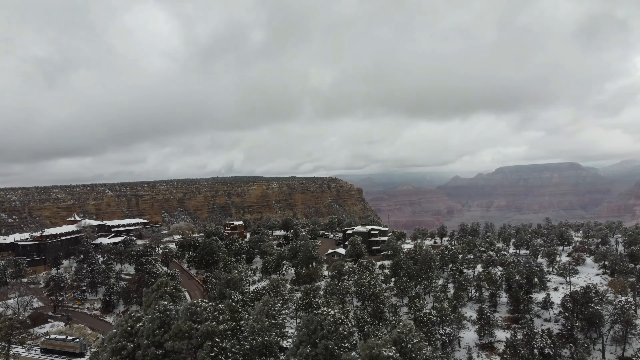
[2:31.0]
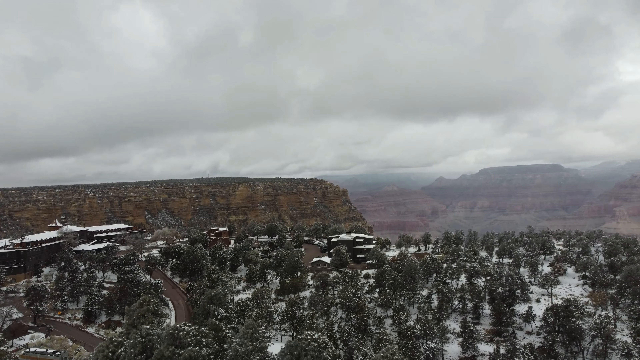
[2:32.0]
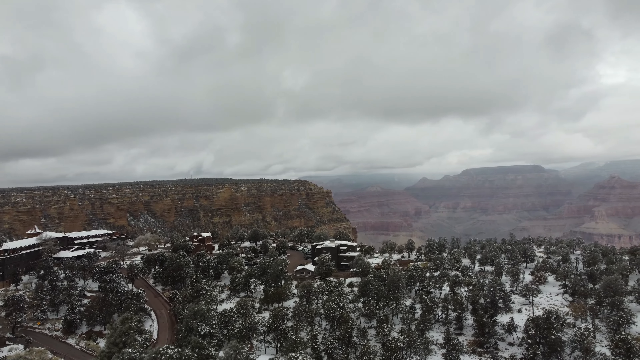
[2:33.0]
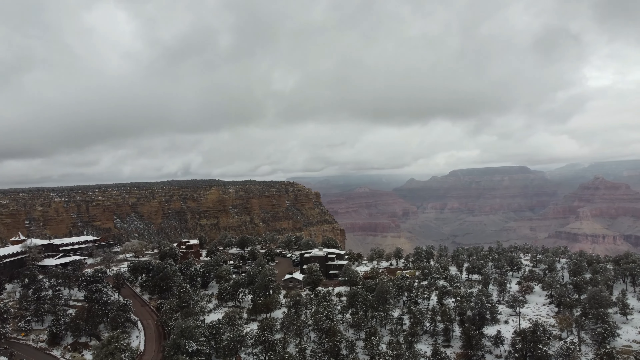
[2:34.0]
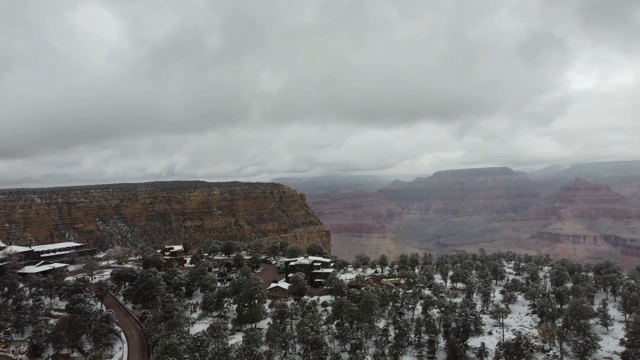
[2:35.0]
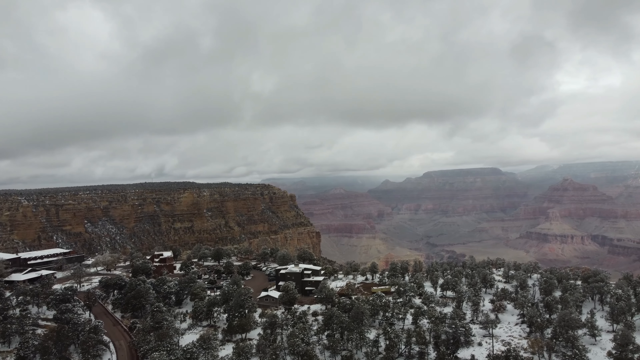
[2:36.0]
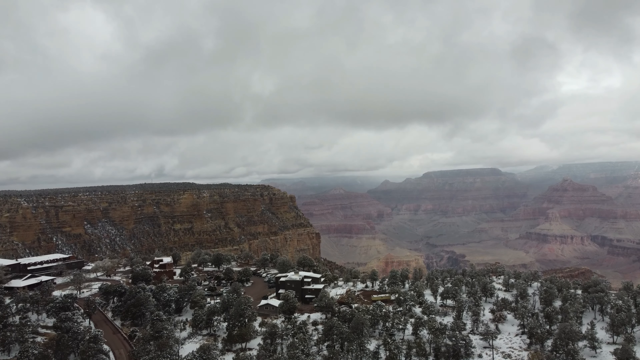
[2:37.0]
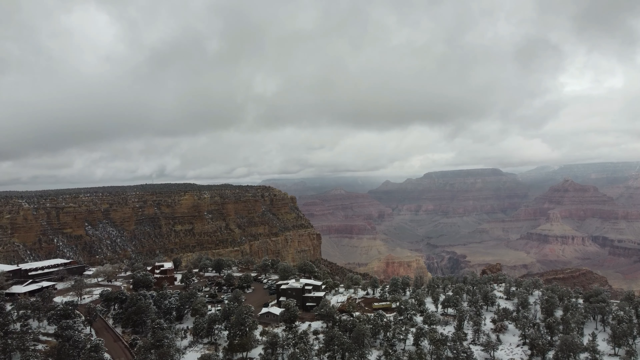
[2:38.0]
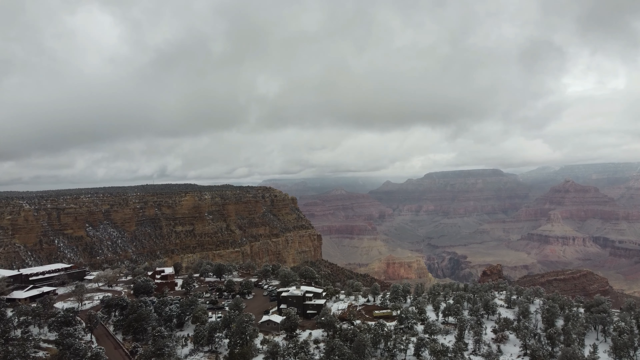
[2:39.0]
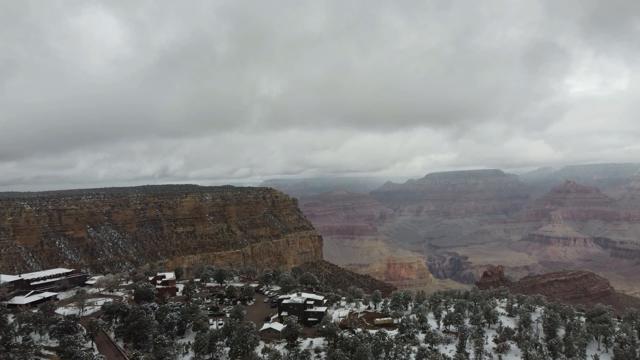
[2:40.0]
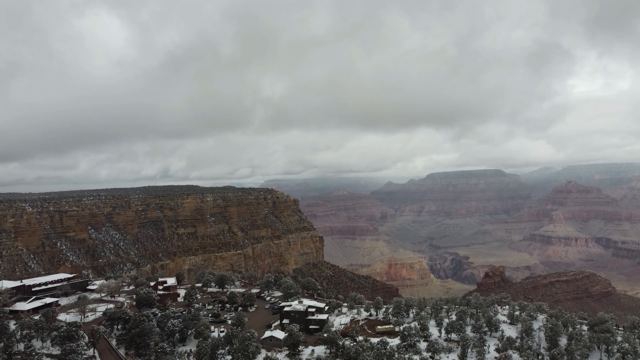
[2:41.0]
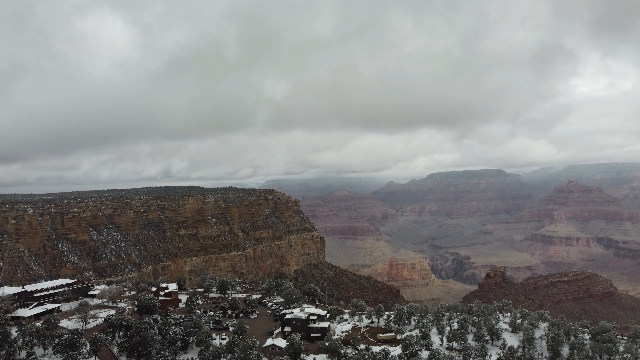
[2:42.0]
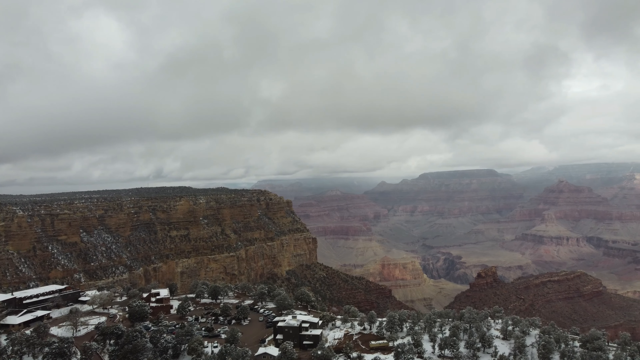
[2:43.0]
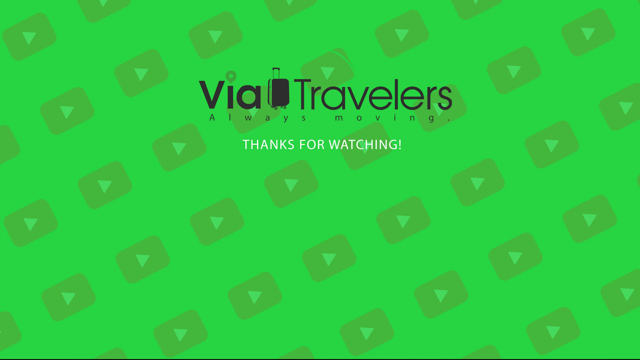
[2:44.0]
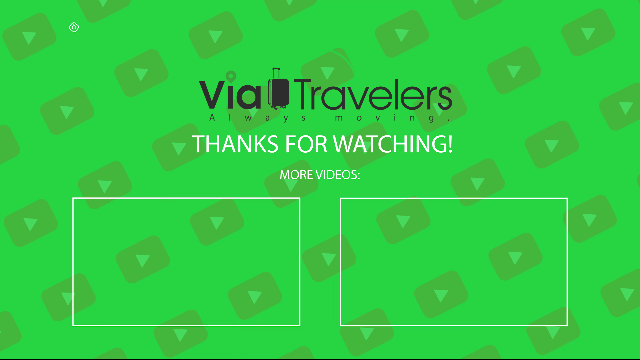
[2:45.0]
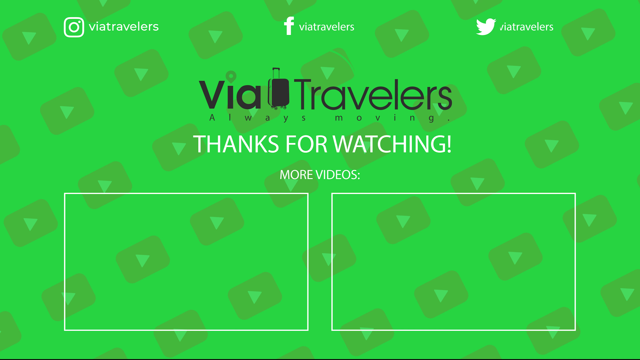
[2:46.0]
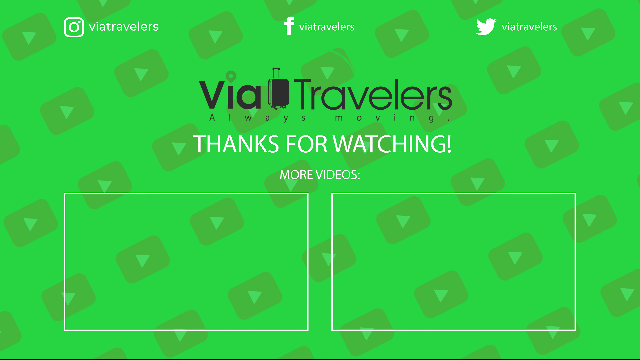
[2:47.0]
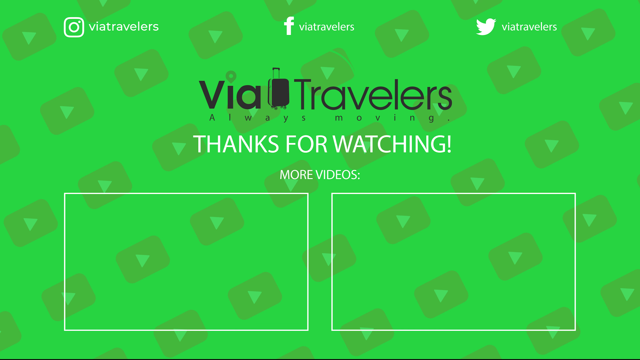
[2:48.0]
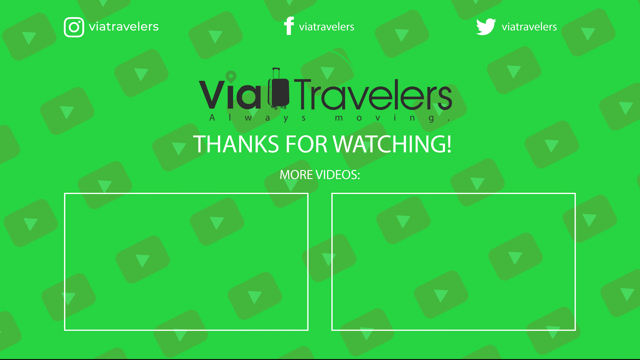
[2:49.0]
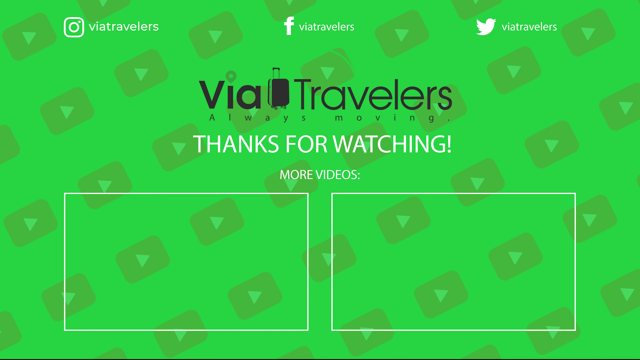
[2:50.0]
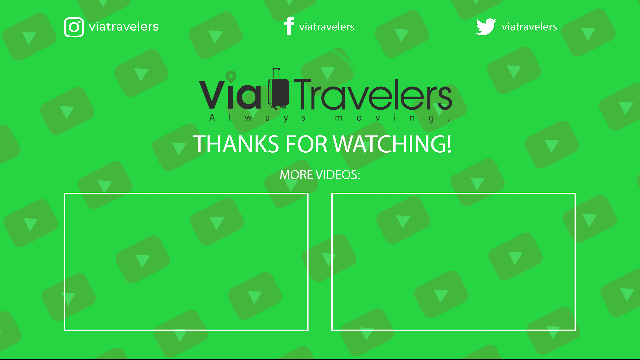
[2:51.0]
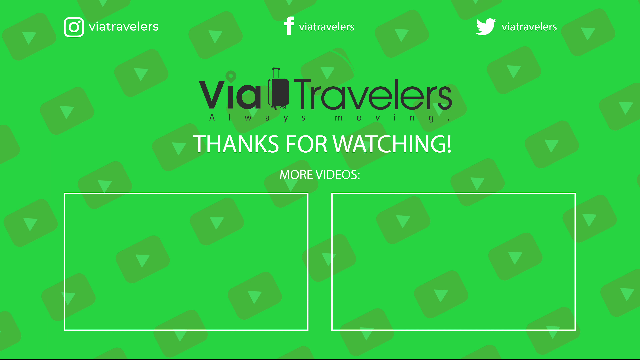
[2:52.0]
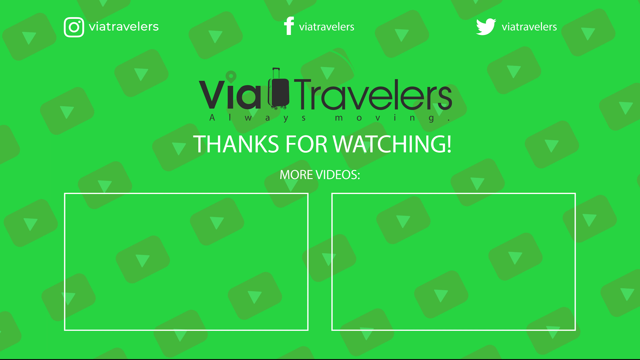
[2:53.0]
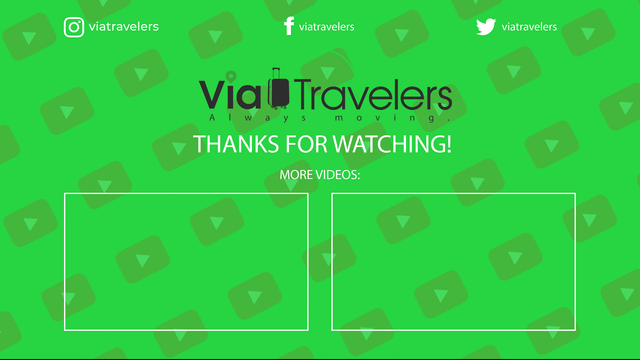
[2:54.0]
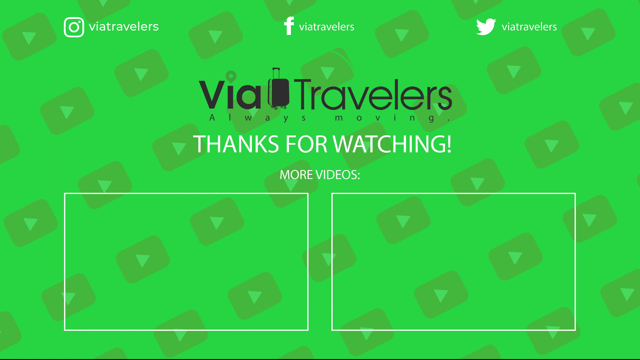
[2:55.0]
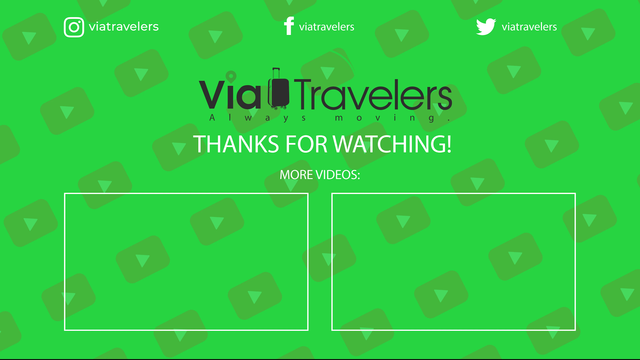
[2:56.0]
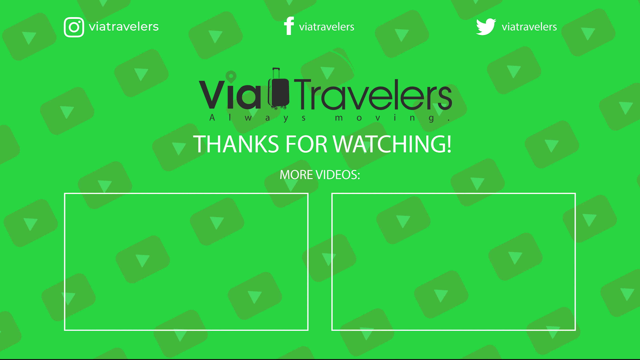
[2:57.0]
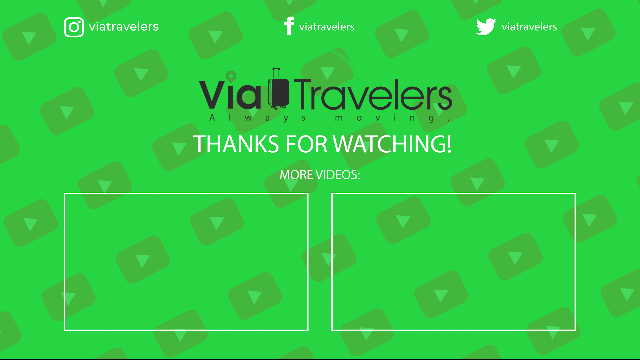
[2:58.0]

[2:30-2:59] After a black screen, the video fades into another shot of the forest, with the camera right above it. The Grand Canyon appears in the distance, with one mountain on the left side and the one in the distance slightly blurry. The video then goes to a green background with YouTube symbols and seven visible lines in the background. Subtitles appear on screen: an Instagram handle in the top left corner, "via travellers" in the middle, and "thanks for watching". Two white blocks appear below, apparently meant for more videos, but nothing appears in them, and the video ends abruptly on the green background.